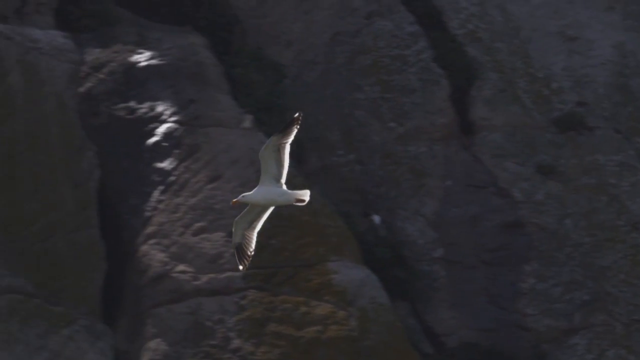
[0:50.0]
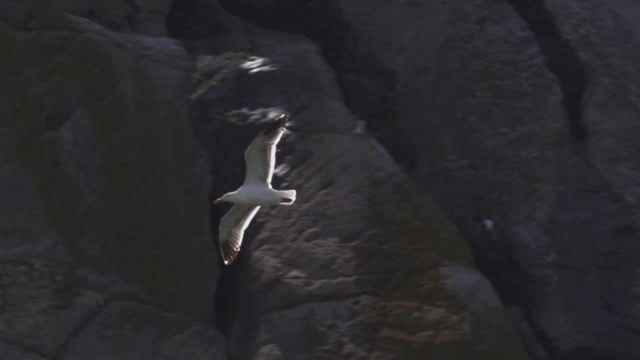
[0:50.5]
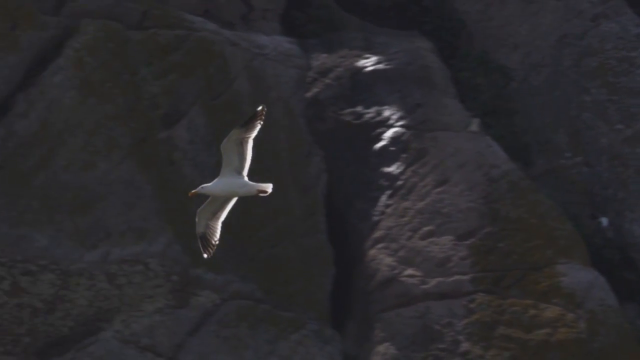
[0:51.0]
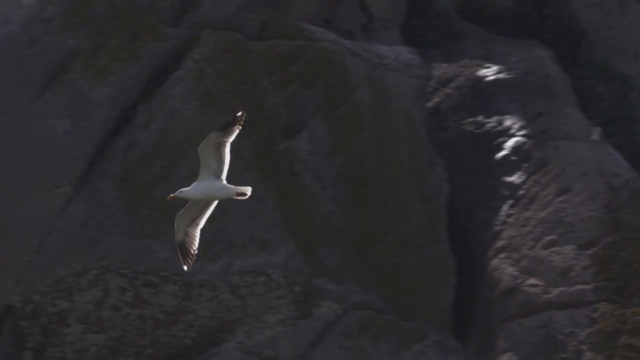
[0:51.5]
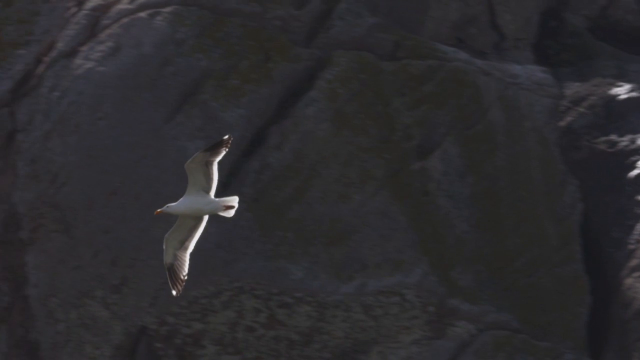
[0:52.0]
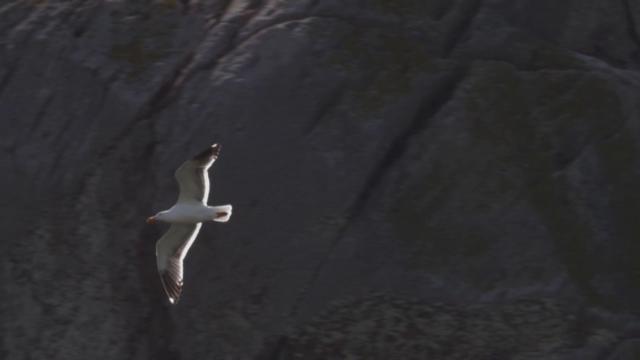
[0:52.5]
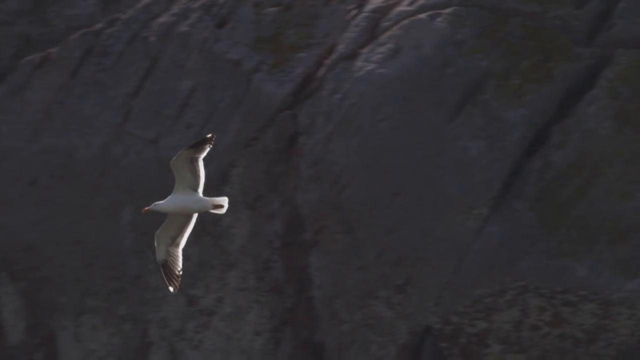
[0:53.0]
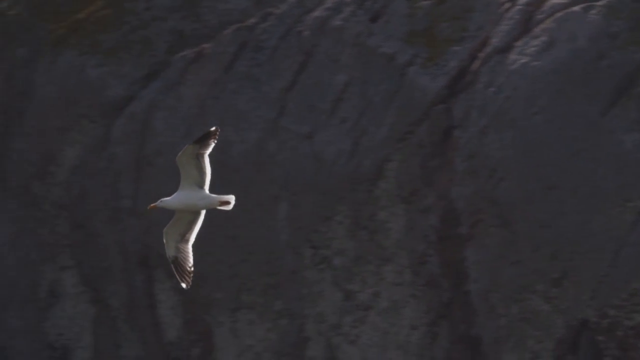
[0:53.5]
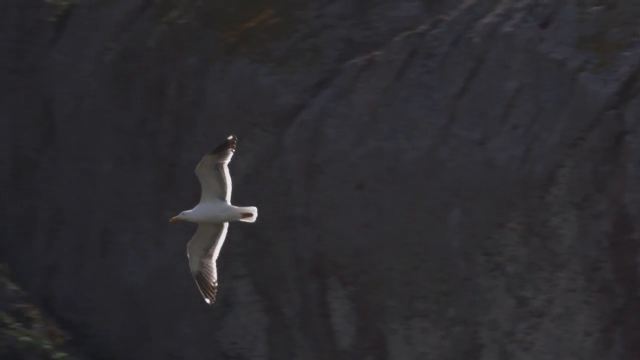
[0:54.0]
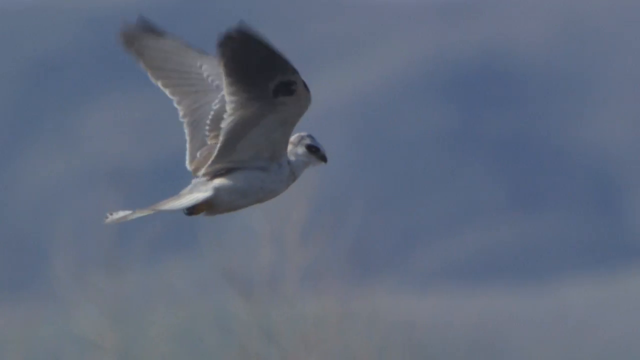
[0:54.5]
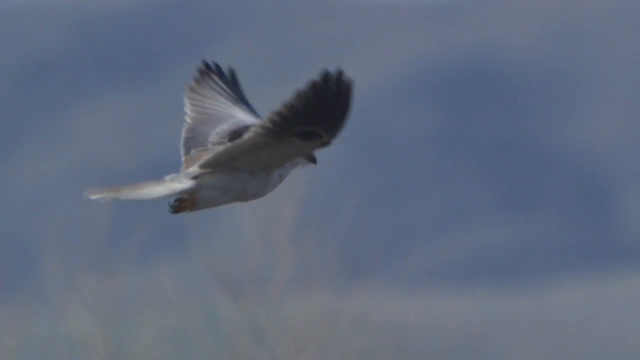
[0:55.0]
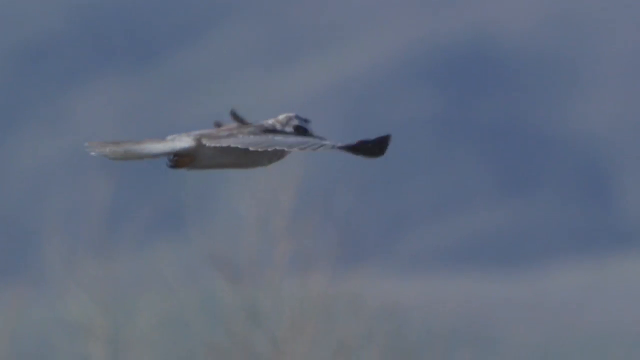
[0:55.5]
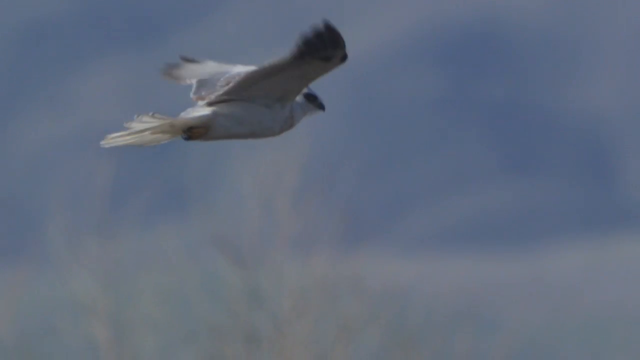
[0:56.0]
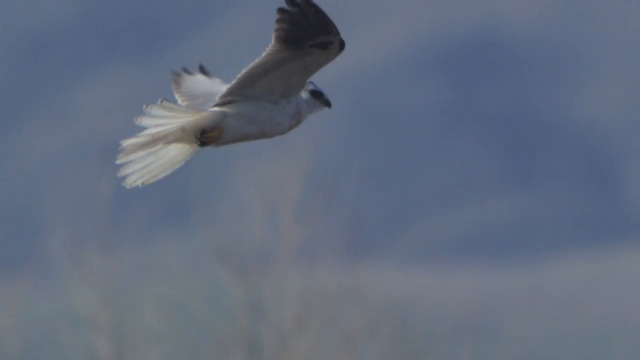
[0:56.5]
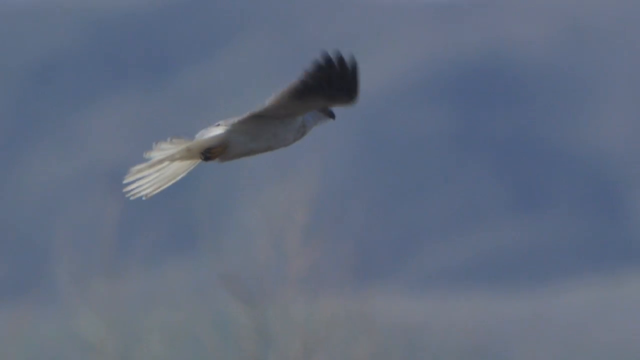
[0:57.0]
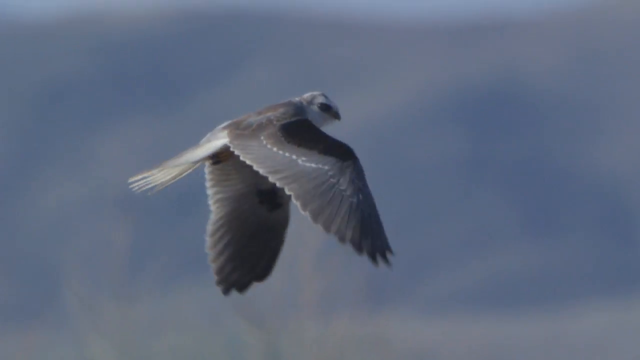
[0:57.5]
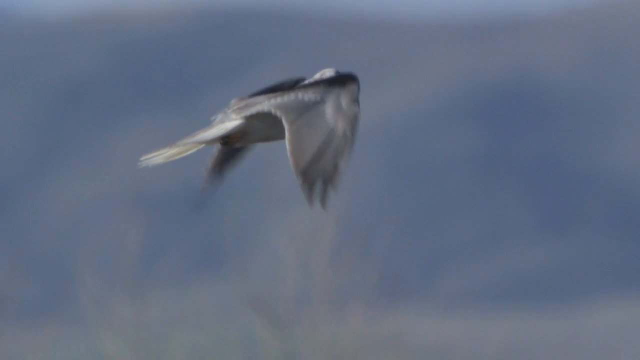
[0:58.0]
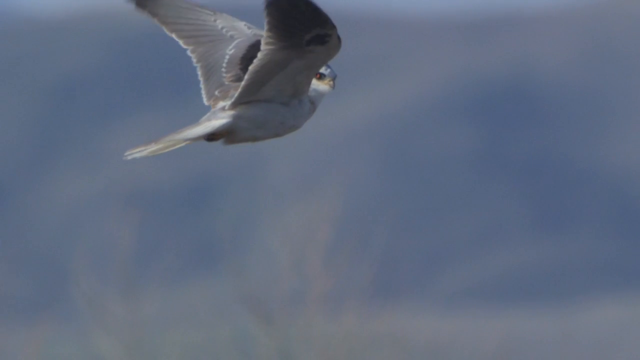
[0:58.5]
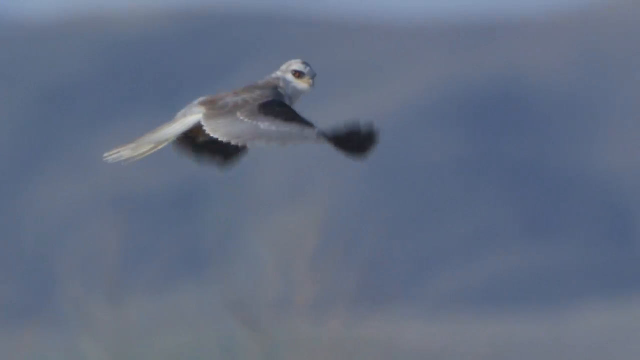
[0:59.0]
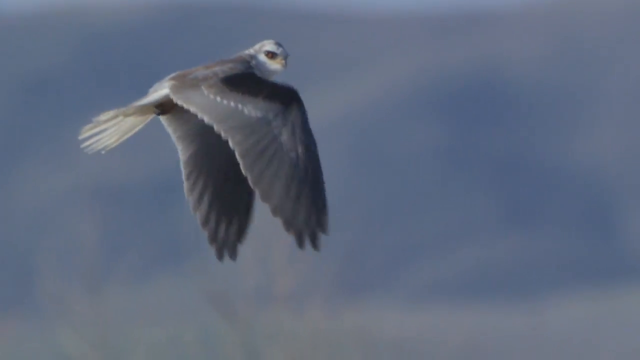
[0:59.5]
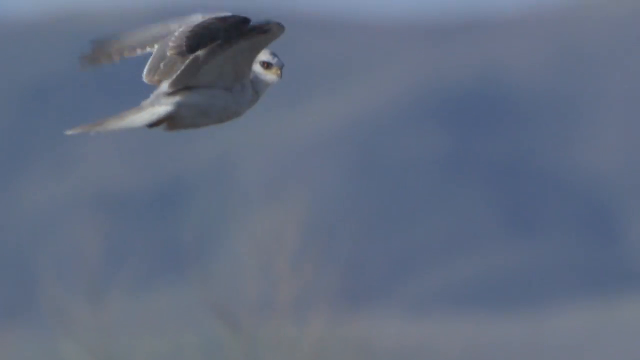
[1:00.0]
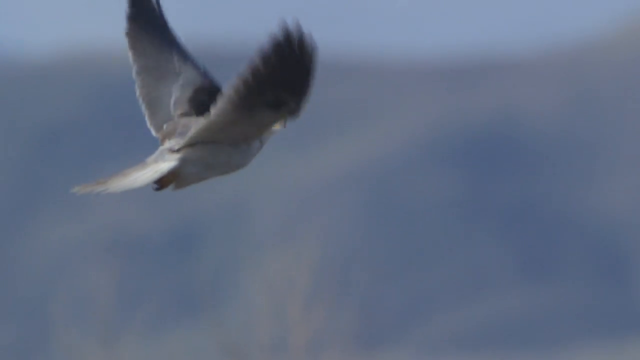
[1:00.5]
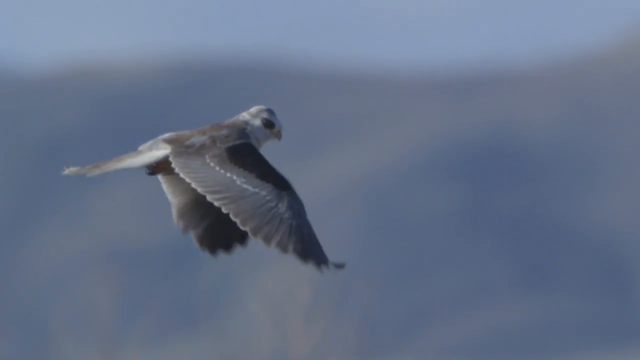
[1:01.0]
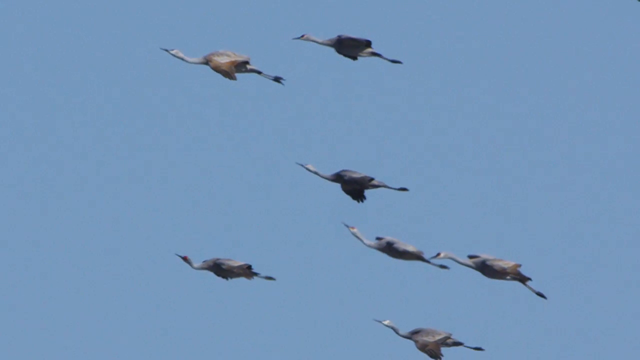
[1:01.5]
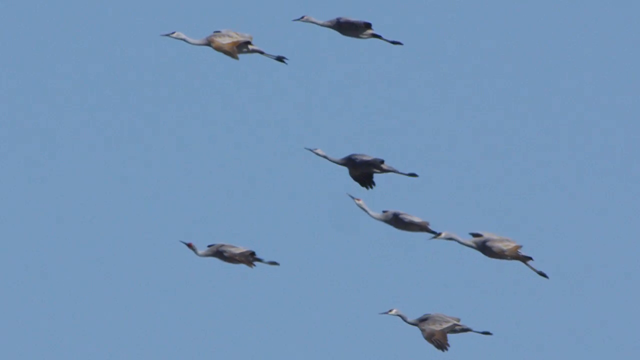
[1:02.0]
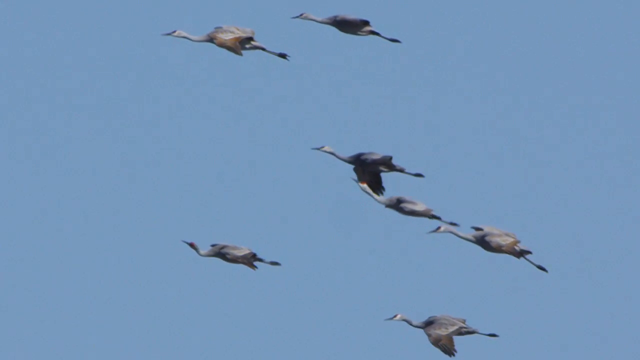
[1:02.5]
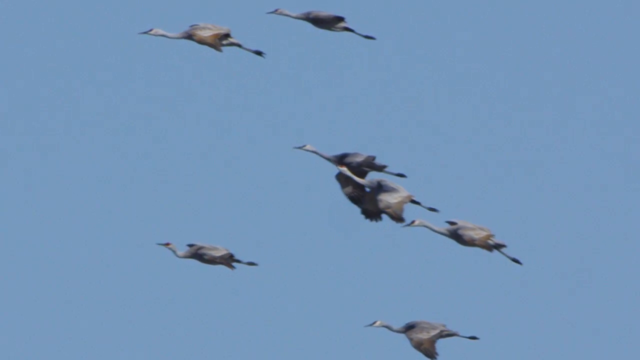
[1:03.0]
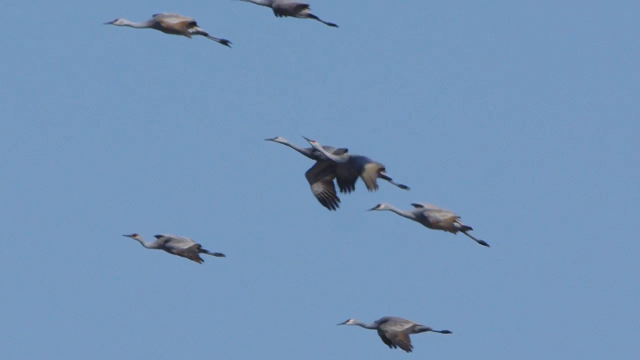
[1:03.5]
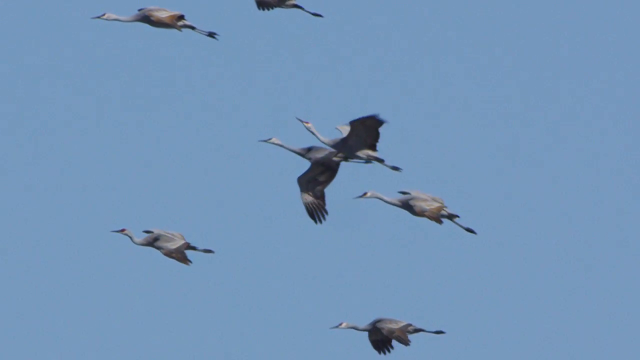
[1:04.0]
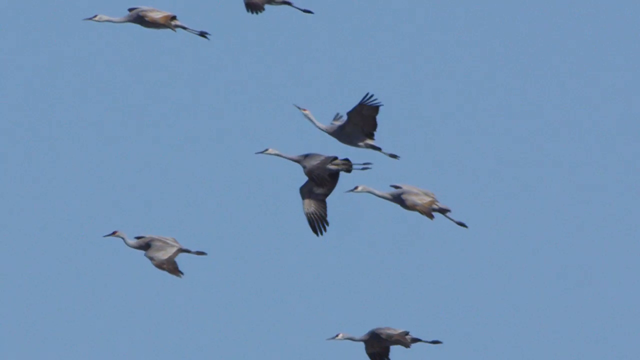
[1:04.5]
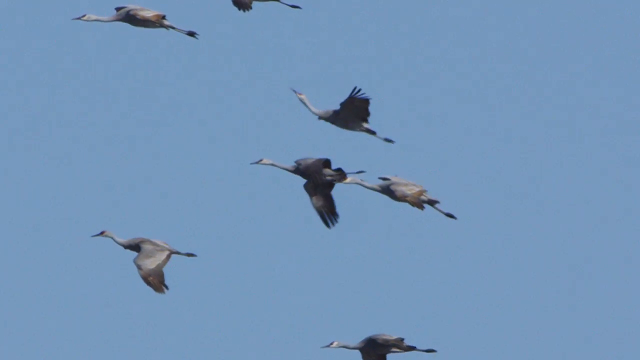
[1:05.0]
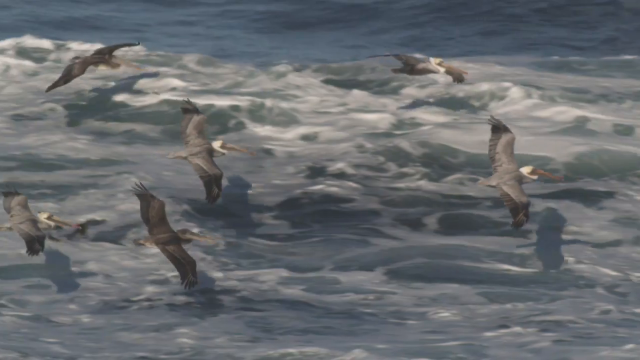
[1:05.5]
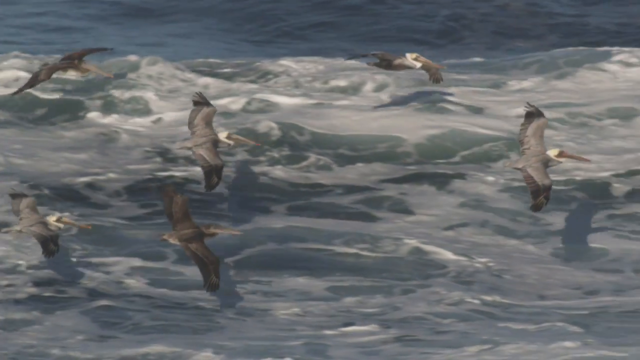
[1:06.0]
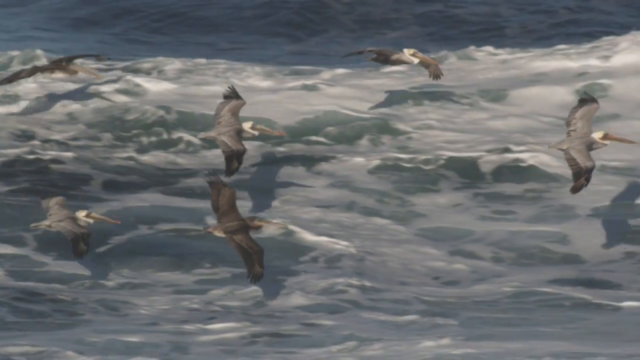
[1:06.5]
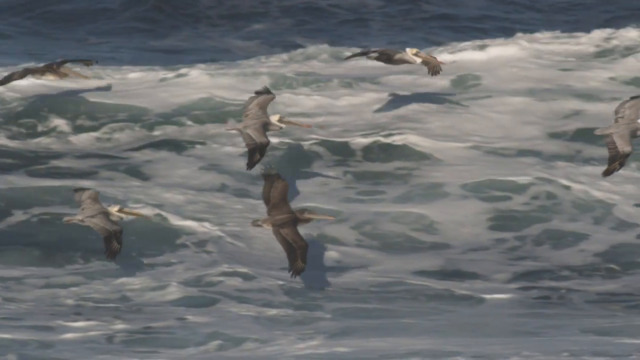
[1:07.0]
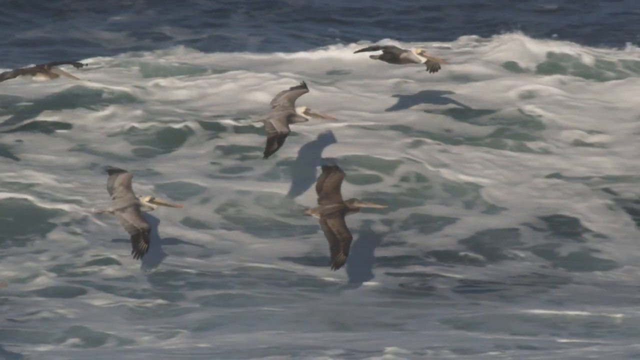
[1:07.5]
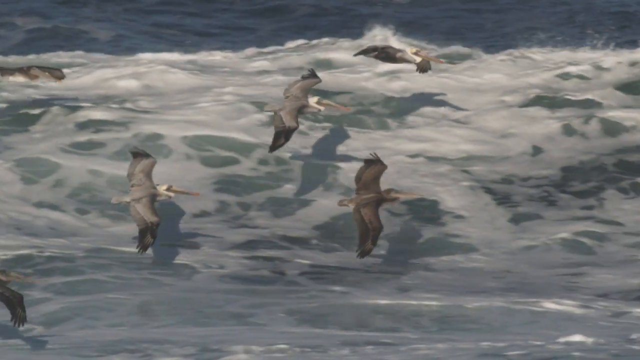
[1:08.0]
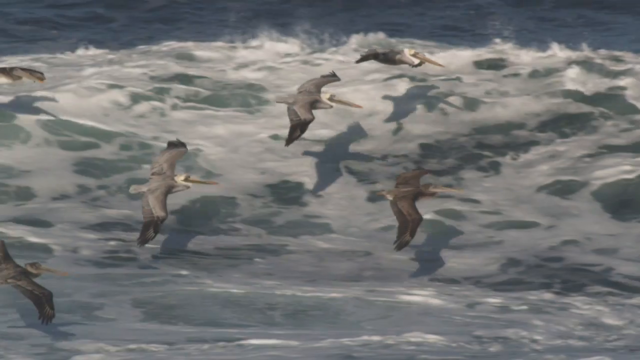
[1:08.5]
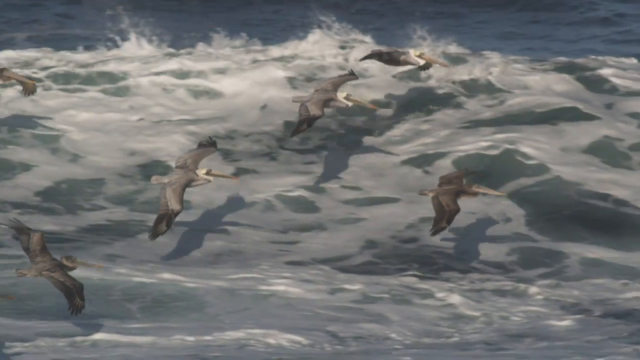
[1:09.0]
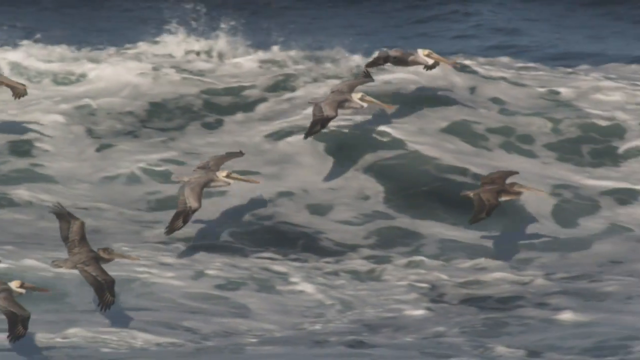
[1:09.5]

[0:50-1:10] The seagull glides. Another bird flaps its wings and looks around; it looks somewhat like a hawk but more like an owl, and its kind is unclear. Geese fly, possibly south, with their legs sticking out straight behind them, seemingly effortlessly. They flap their wings, then stop flapping and glide with their wings folded down and their feet sticking out straight behind them; they do not all do this at the same time but take turns. Next, what appear to be fish-eating birds fly over what appears to be the ocean. The bird on top looks like it has caught something.